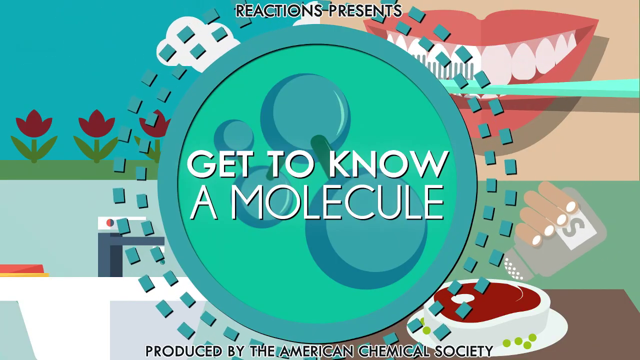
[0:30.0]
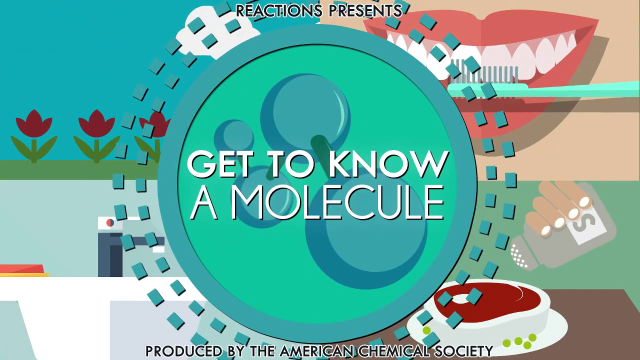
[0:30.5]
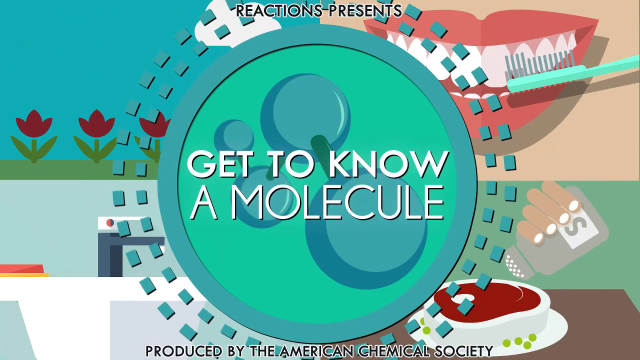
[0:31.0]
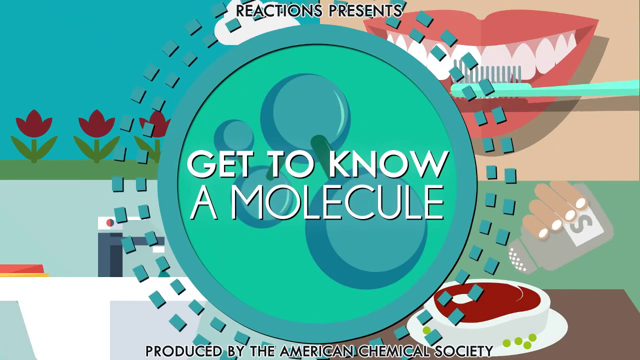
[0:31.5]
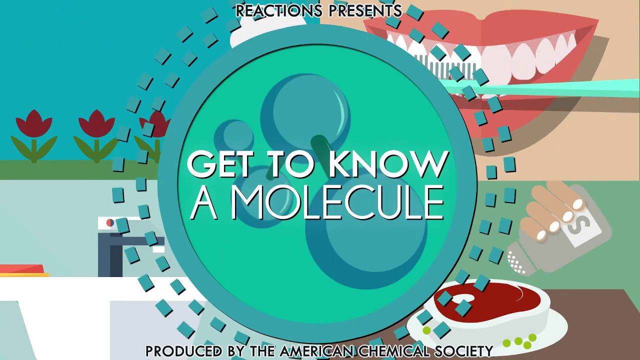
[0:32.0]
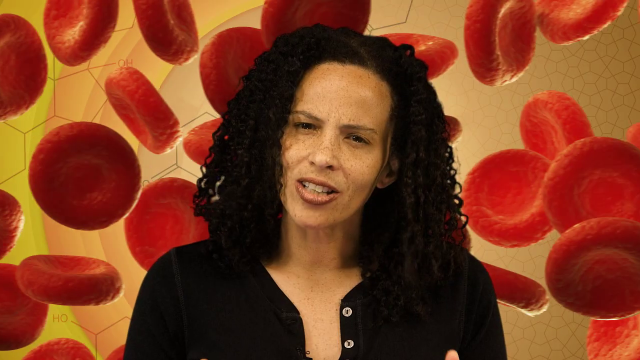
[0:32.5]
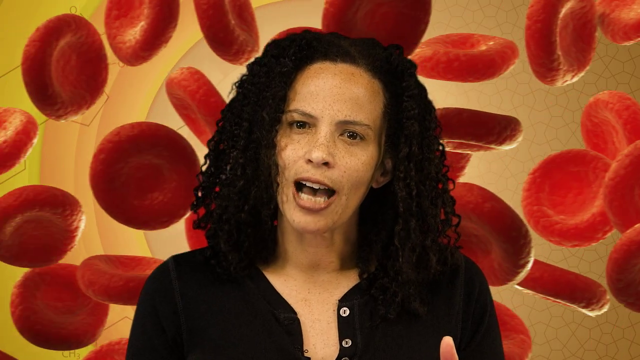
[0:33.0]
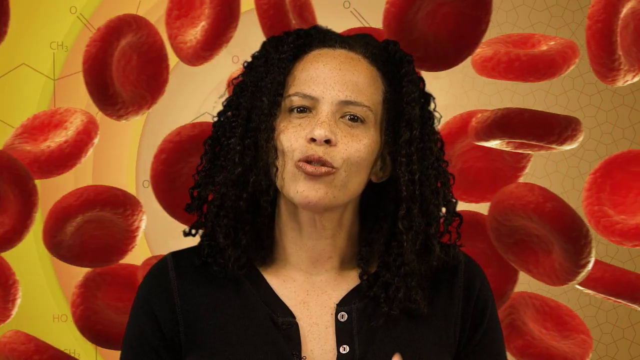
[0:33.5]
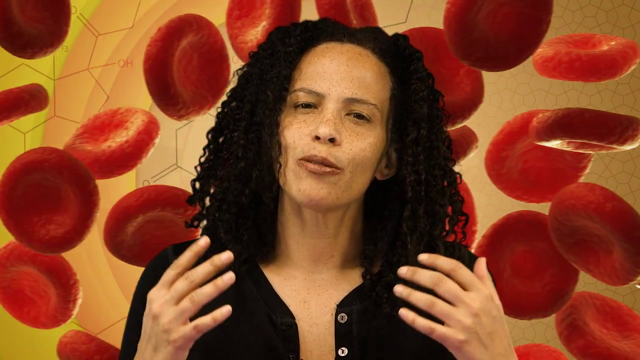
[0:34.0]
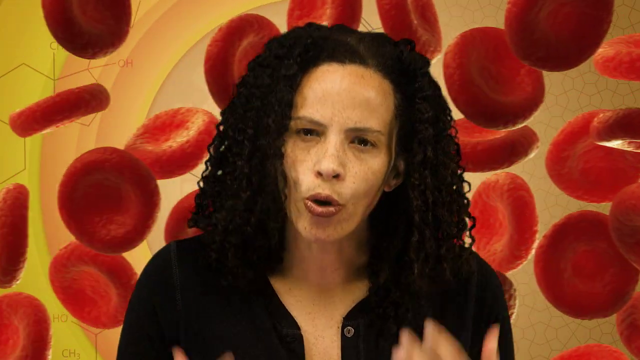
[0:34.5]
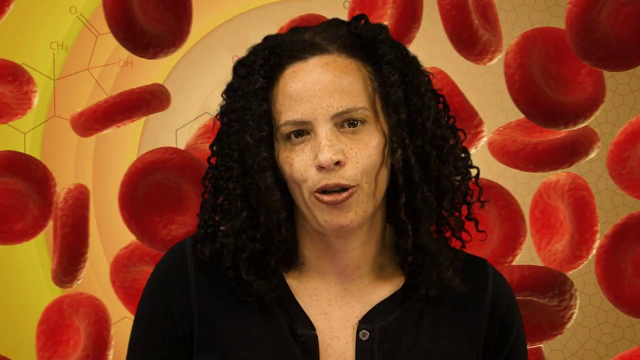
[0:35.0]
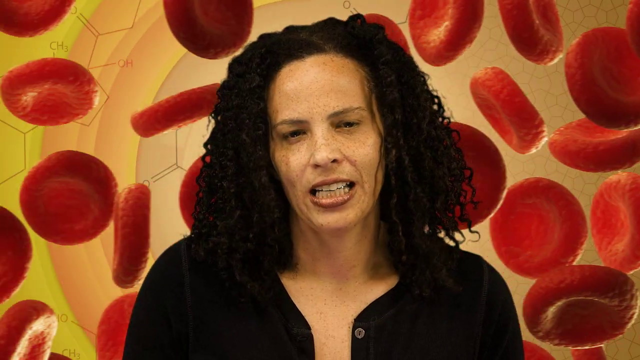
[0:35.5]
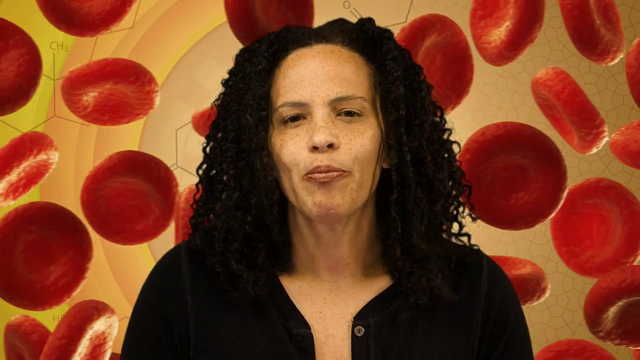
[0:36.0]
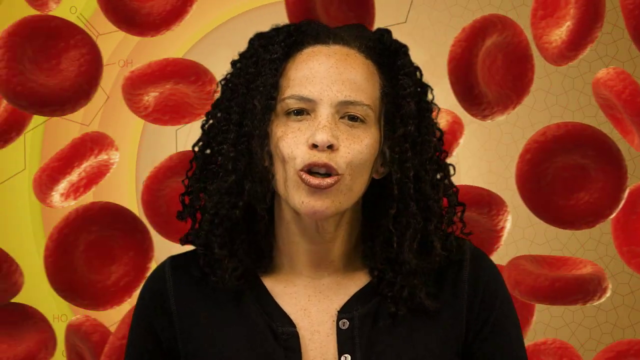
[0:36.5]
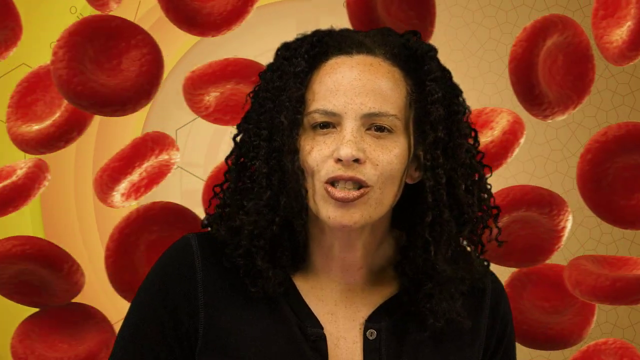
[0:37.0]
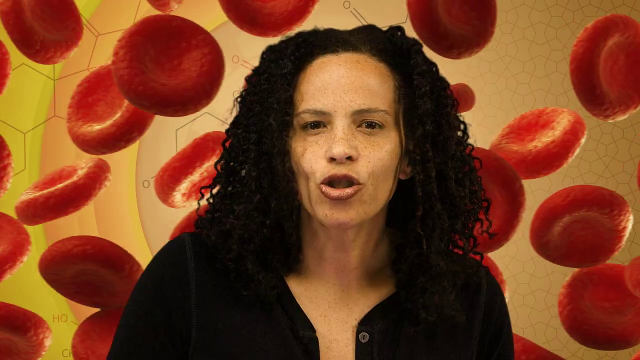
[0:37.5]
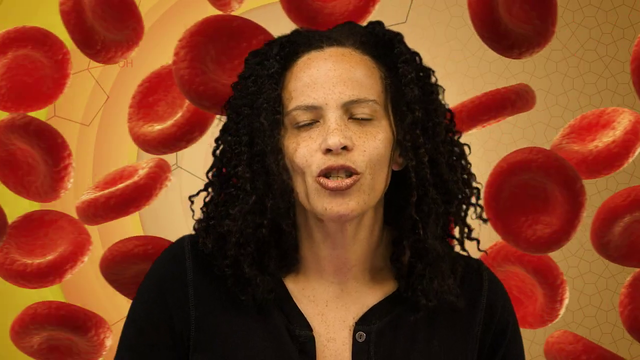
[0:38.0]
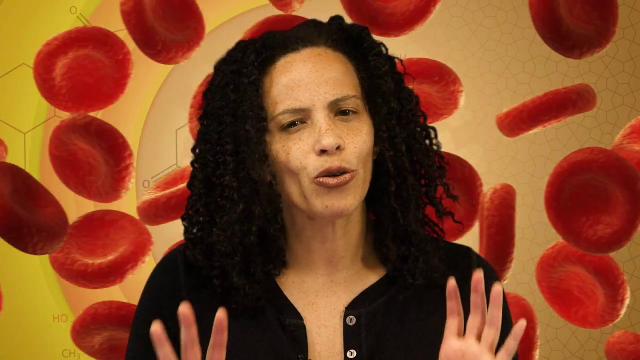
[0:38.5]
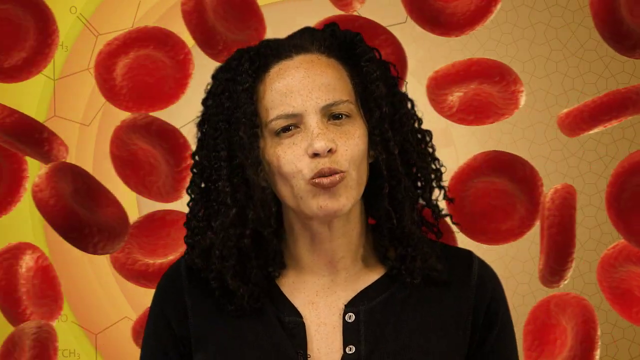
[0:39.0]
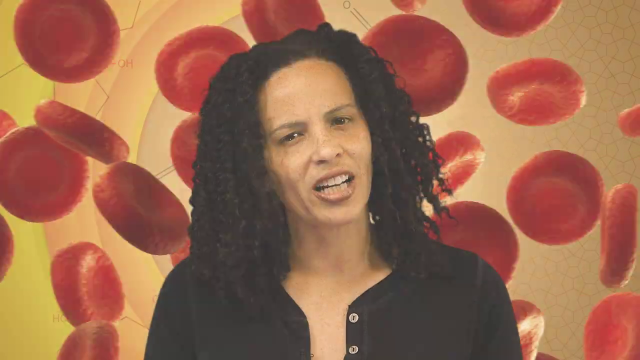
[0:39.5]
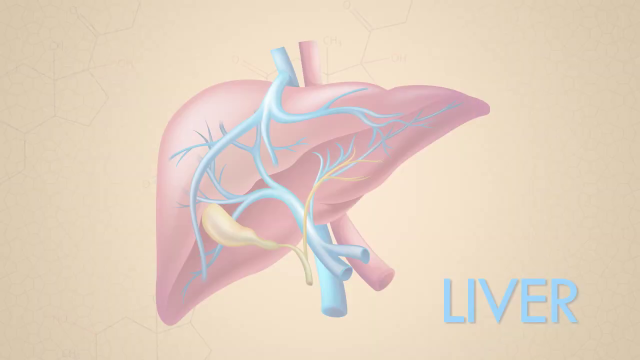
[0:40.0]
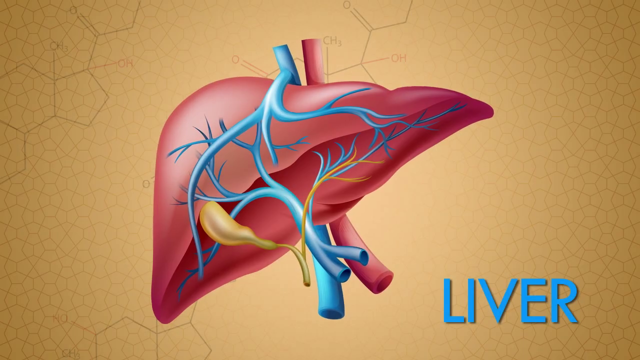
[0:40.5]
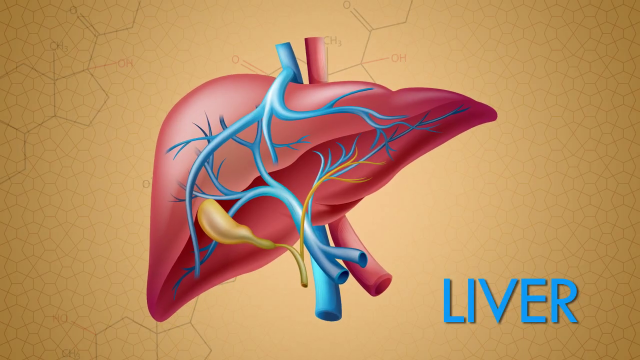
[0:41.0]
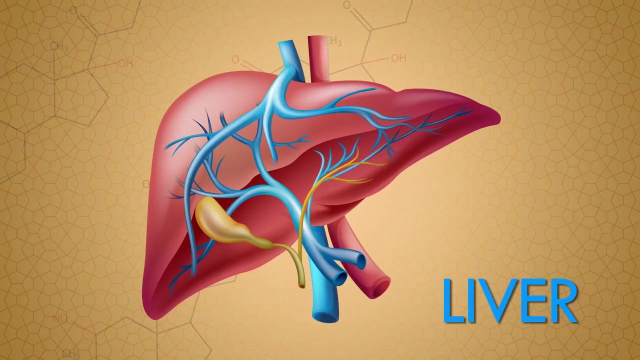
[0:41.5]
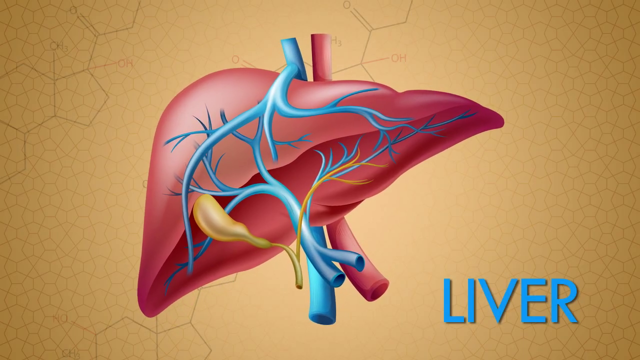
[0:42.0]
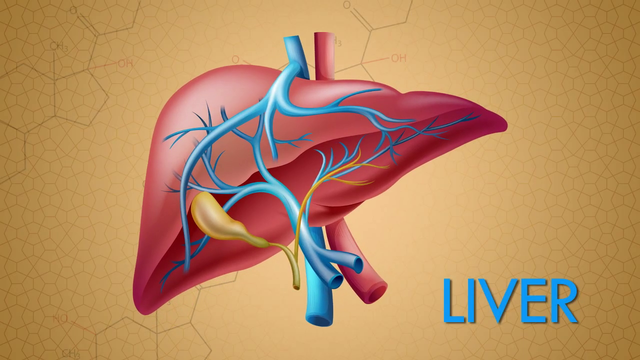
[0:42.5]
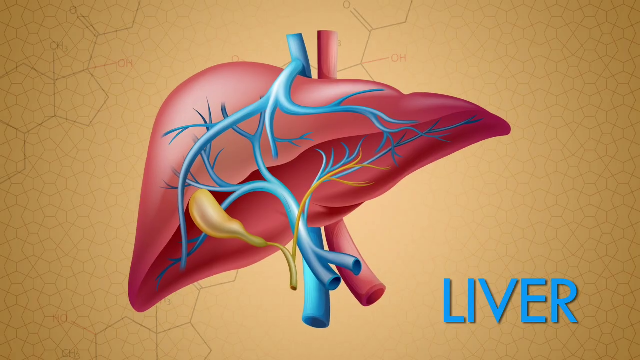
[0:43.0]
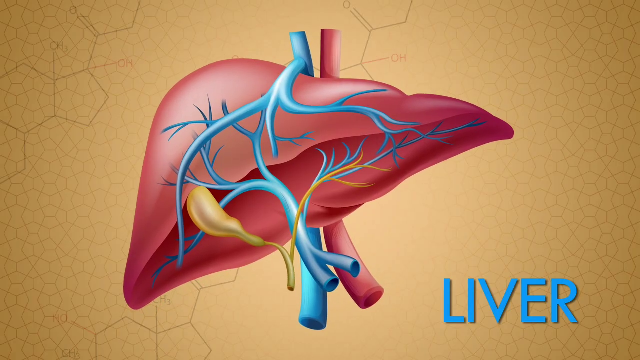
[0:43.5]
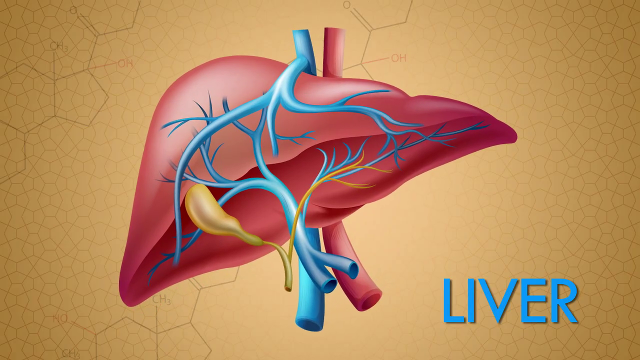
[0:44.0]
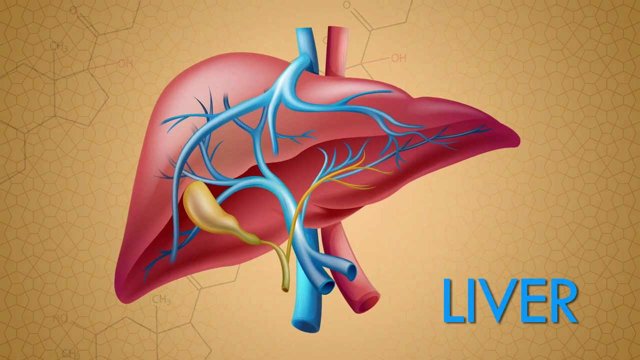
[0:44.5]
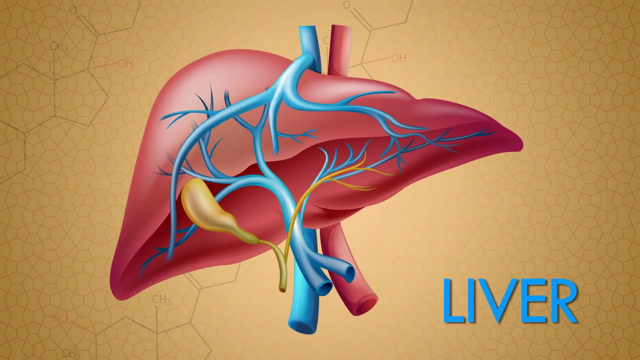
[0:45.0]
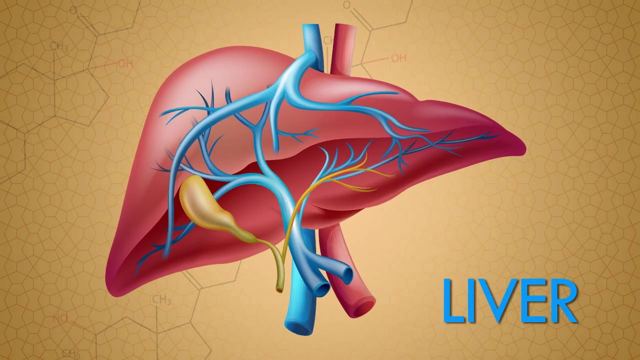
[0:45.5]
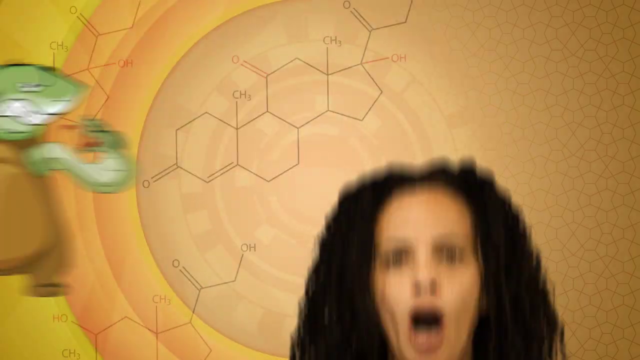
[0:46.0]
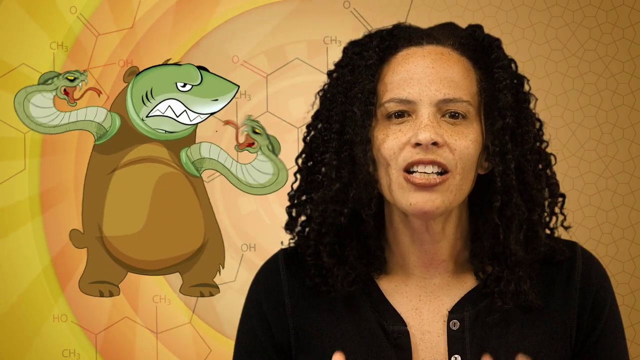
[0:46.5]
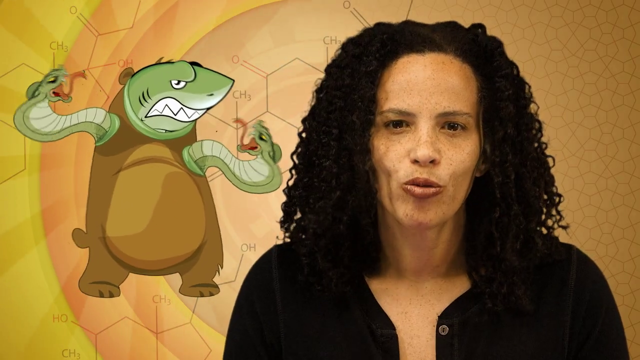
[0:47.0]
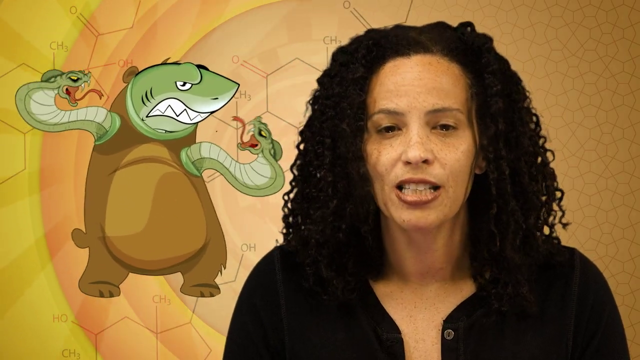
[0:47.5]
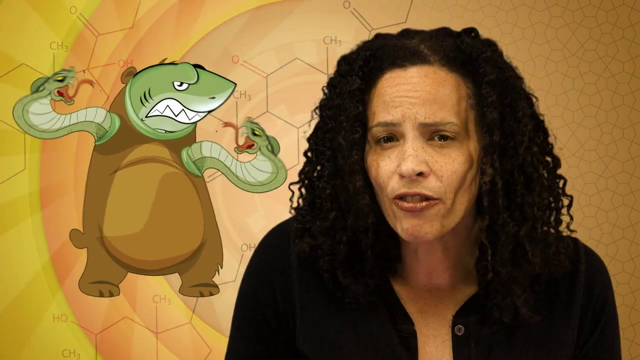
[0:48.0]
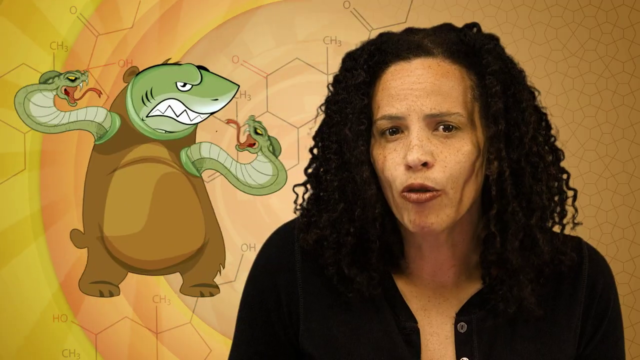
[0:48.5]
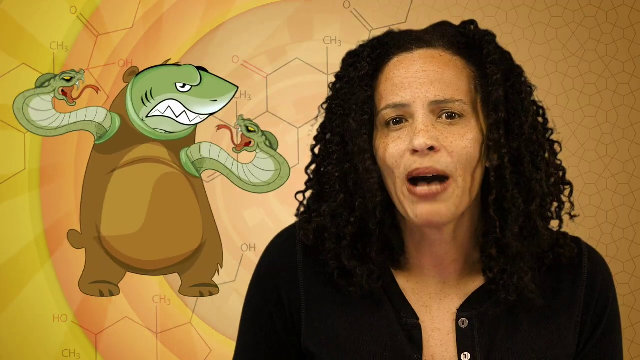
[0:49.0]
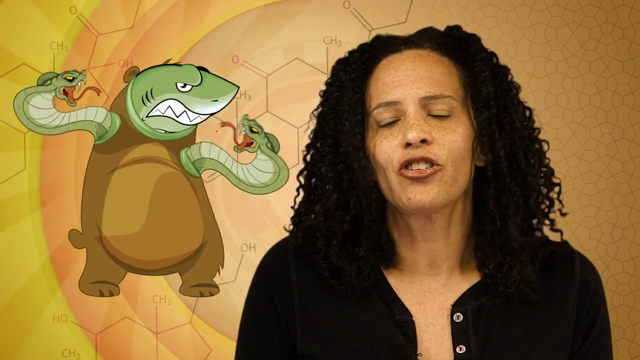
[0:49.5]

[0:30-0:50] The woman appears very close, in the middle, with many red blood cells floating to the right behind her. She has light brown skin and continues talking while looking at the viewer. The scene changes to a picture of a liver, light red with blue veins running through it, with the word "liver" in the bottom right corner. The woman then appears on the right, talking and looking at the viewer, while the monster with a shark's head, snakes for arms and the body of a brown bear is on the left. The woman has thick black curly hair.